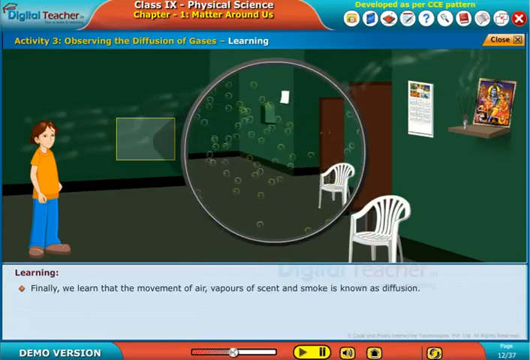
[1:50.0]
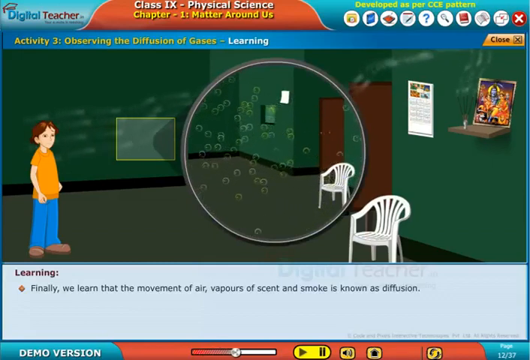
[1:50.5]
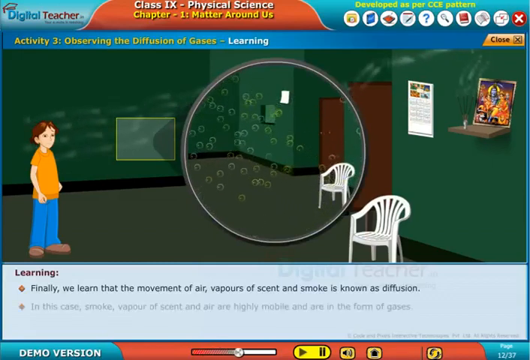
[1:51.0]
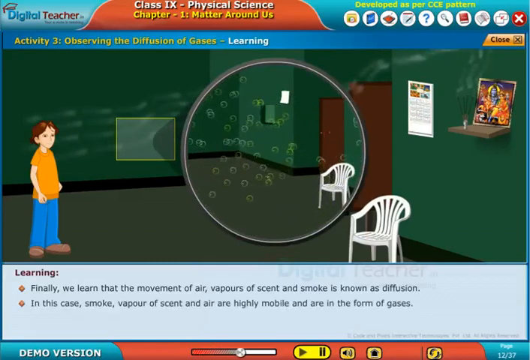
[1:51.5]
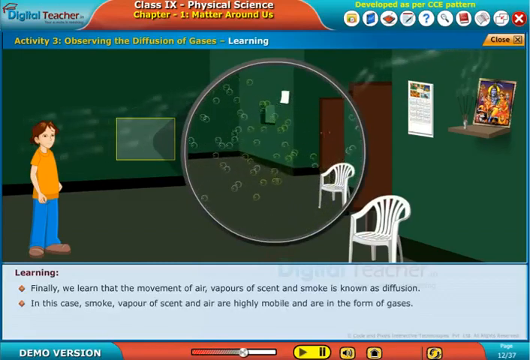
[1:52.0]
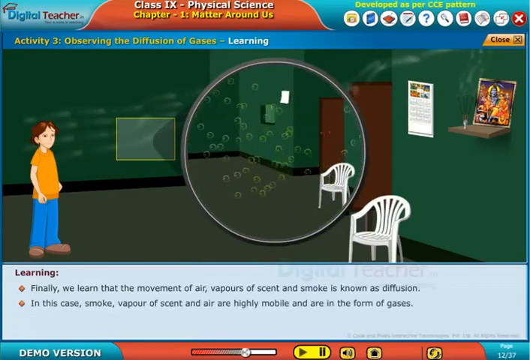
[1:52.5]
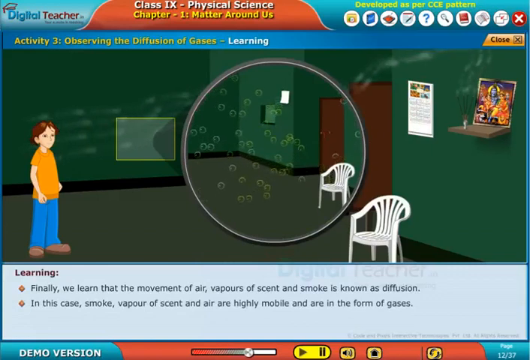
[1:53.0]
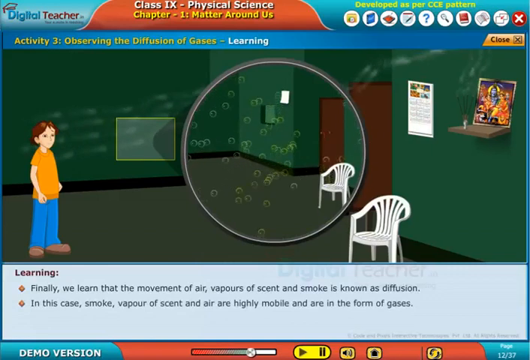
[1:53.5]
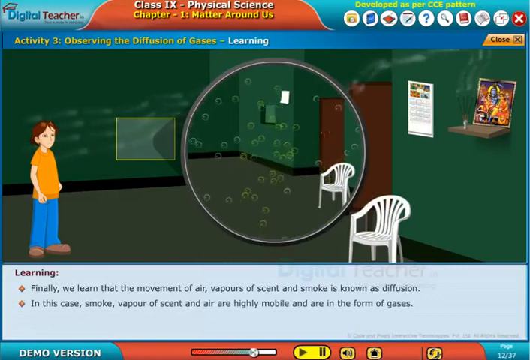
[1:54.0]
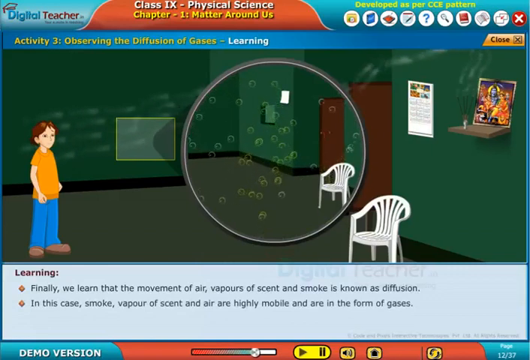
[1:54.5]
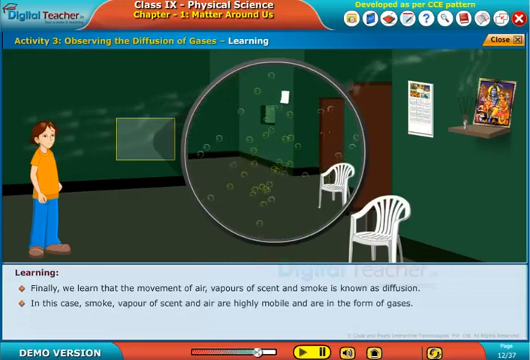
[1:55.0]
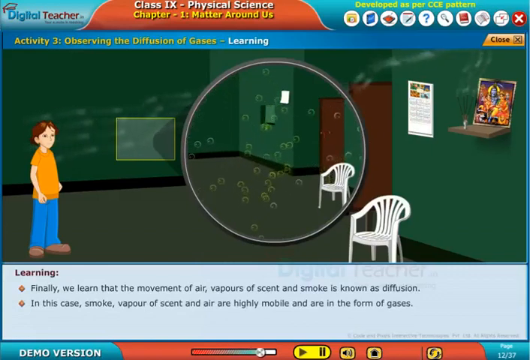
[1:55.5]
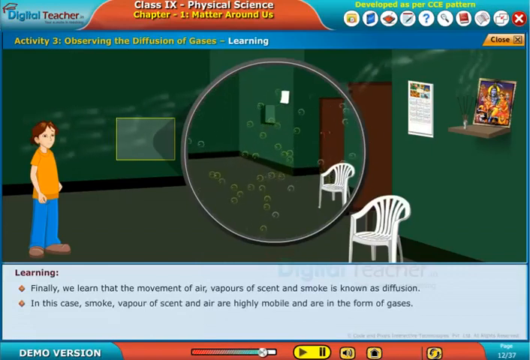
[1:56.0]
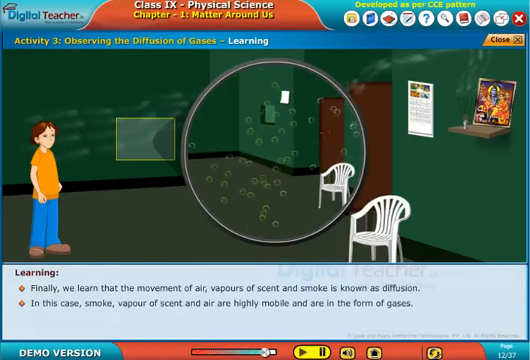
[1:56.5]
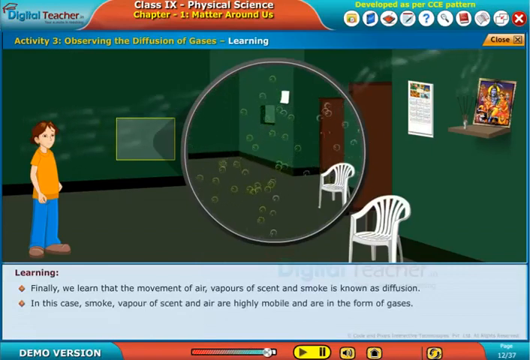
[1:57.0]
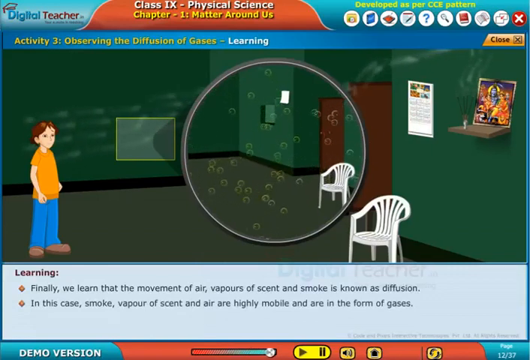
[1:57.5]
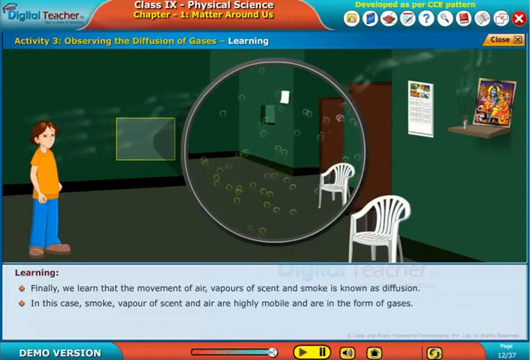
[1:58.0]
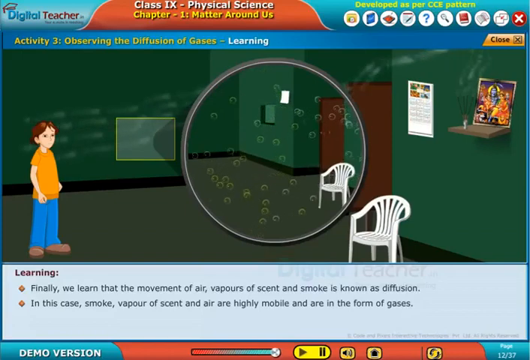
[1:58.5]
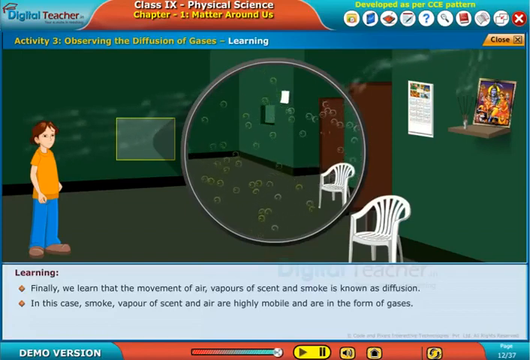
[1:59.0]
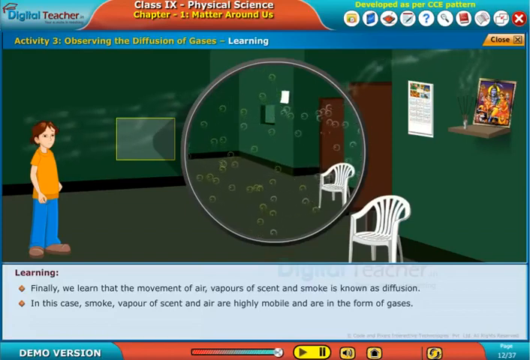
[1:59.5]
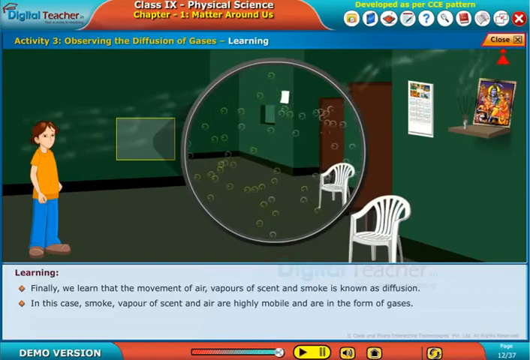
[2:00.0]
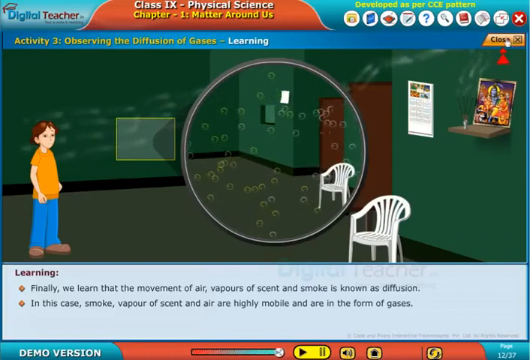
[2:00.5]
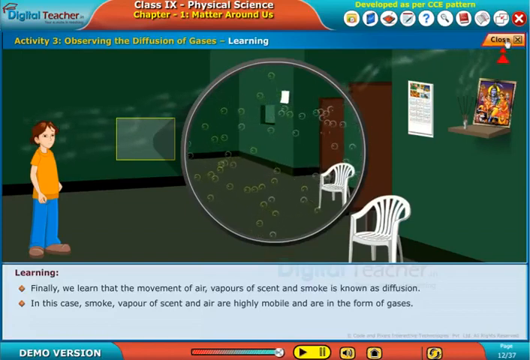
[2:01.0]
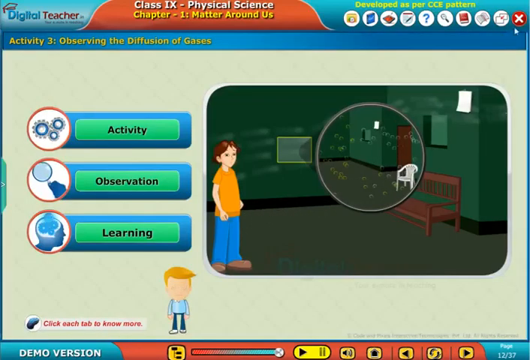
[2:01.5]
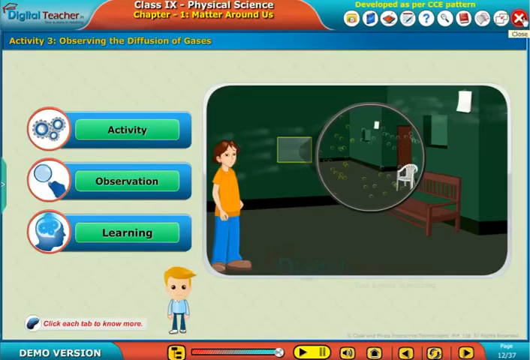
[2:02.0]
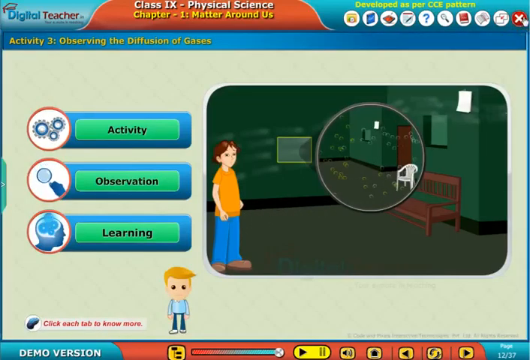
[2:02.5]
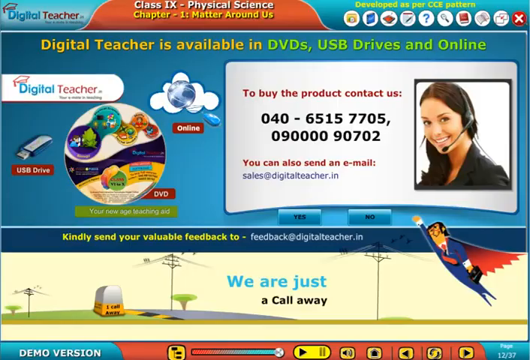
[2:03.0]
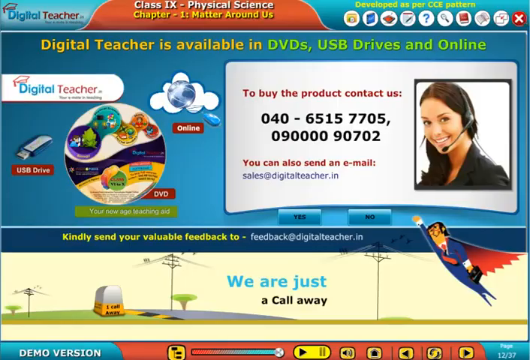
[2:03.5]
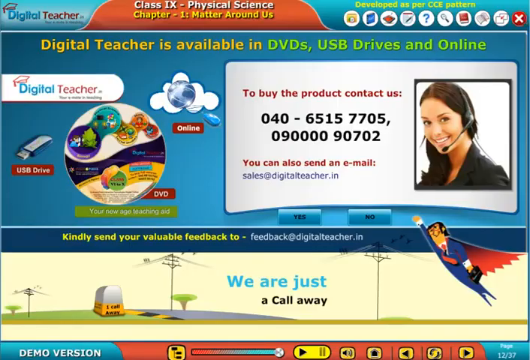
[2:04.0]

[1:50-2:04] "Physical science" is written at the top. Smoke from the incense passes around the circle in the centre, and bubbles in the smoke head toward the person standing in the room. At the bottom is written "learning," with the text "Finally, we learn that the movement of air, vapors of scent, and the smoke is known as diffusion. In this case, smoke, vapor of scent, and air are highly mobile and are in the form of gases." Next, telephone numbers for contact are shown, with a person wearing black headphones and a black top on the right side. On the left side is an image of a USB drive, and a DVD disc is at the bottom. There is what appears to be pole lines, and "we are just a call away" is written at the bottom of the right hand side. A man who appears to be like Batman flies, wearing a blue suit and a red tie.